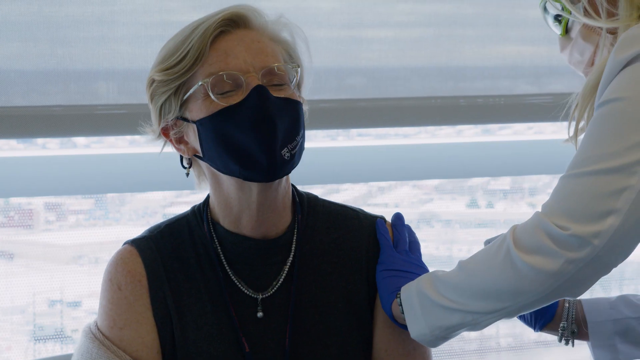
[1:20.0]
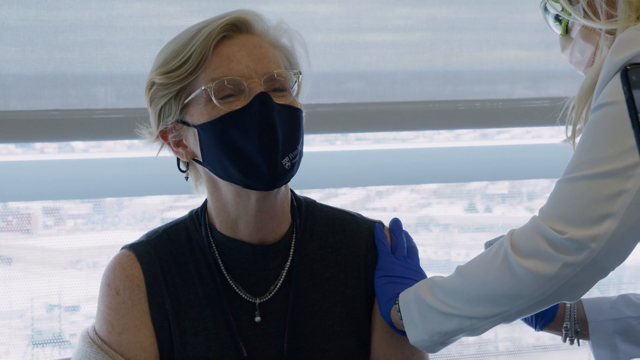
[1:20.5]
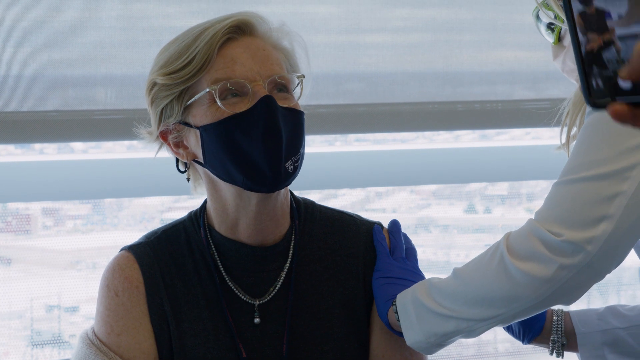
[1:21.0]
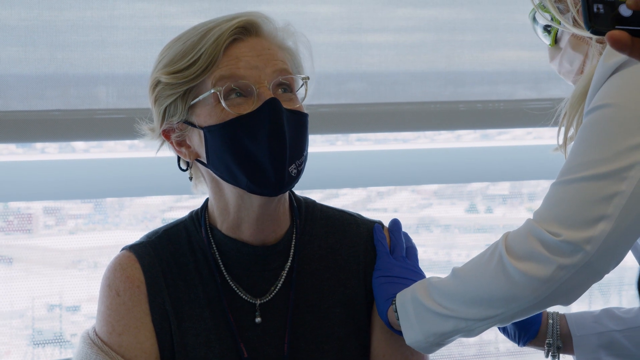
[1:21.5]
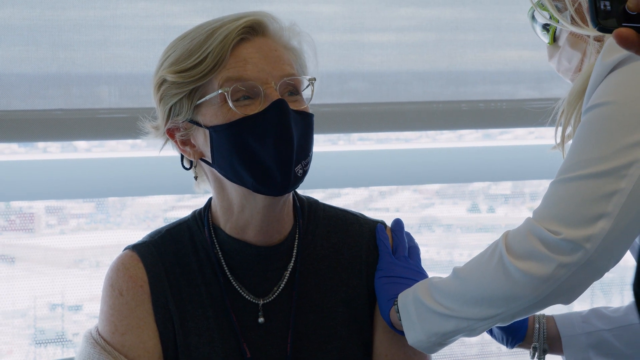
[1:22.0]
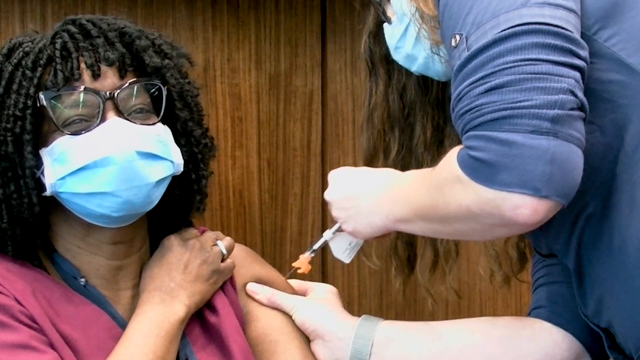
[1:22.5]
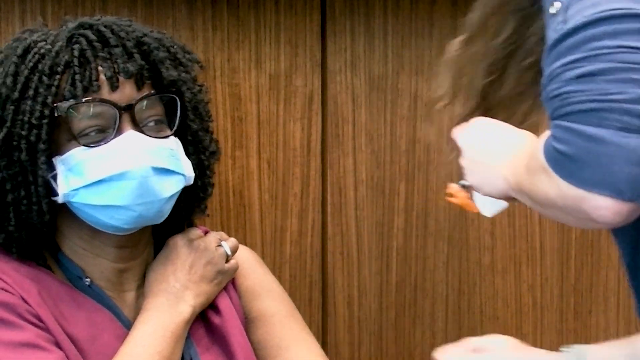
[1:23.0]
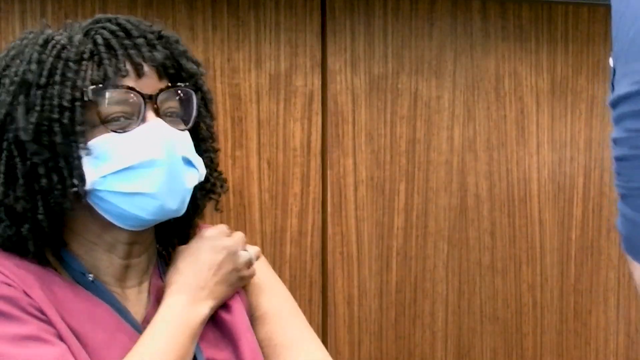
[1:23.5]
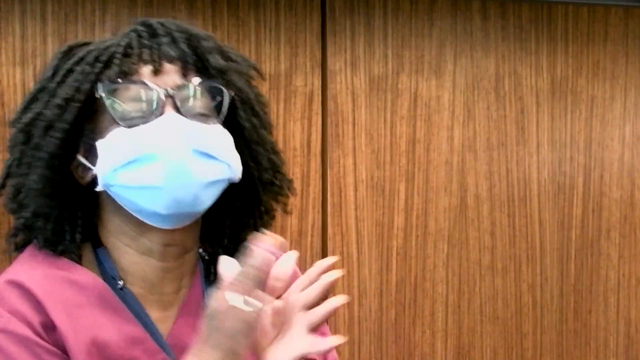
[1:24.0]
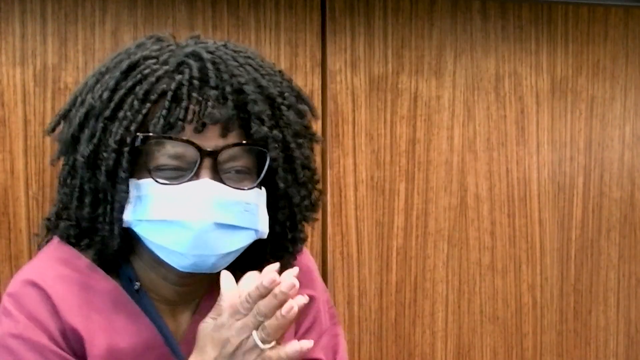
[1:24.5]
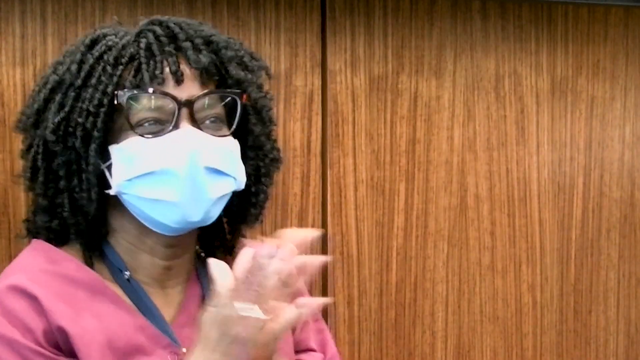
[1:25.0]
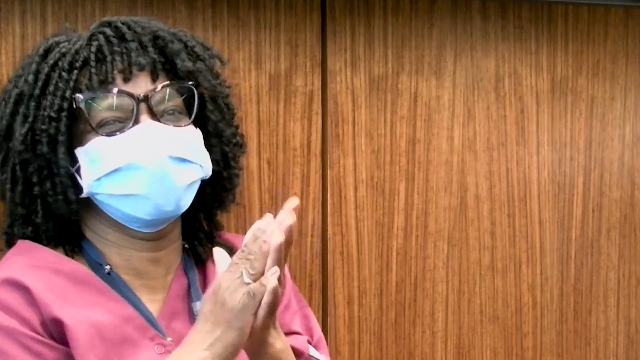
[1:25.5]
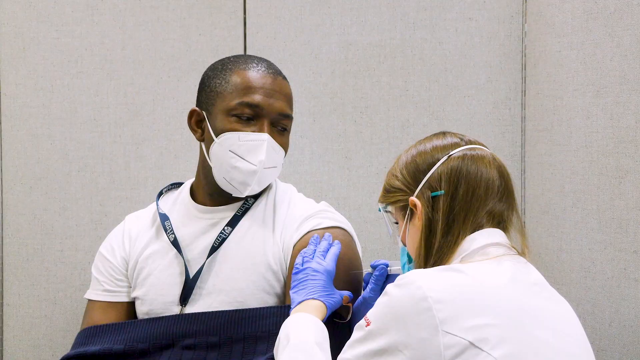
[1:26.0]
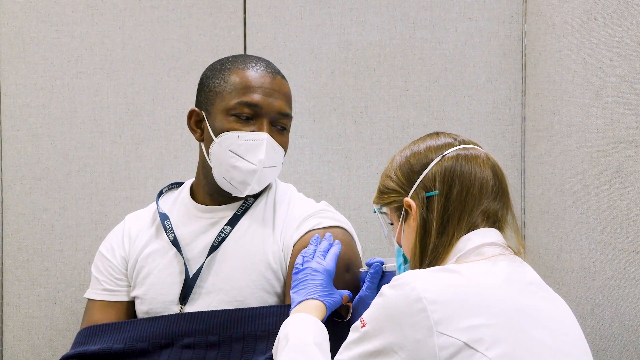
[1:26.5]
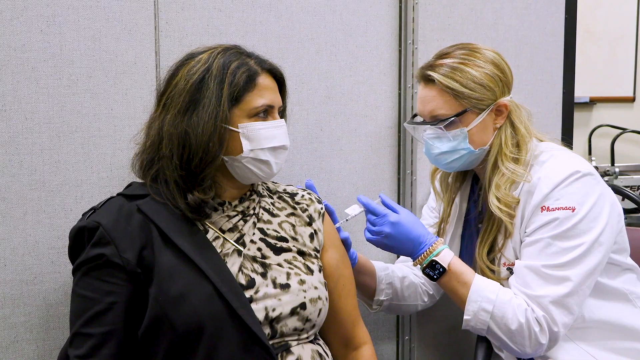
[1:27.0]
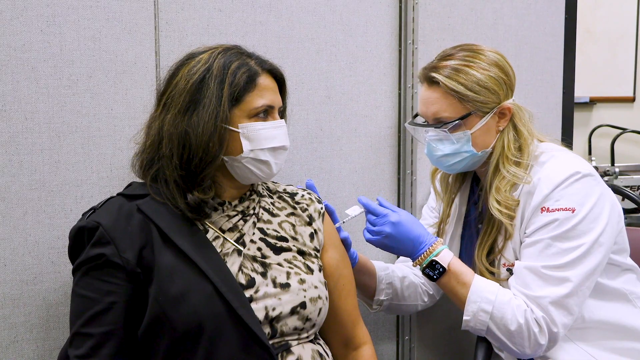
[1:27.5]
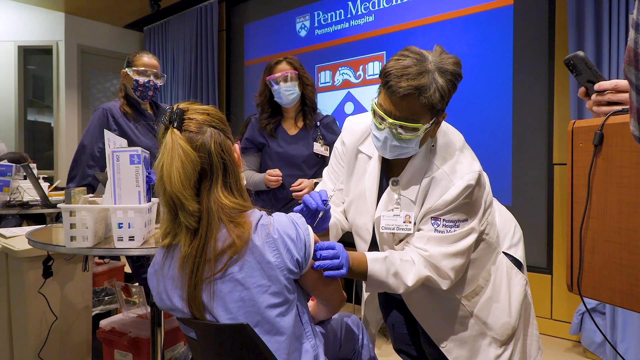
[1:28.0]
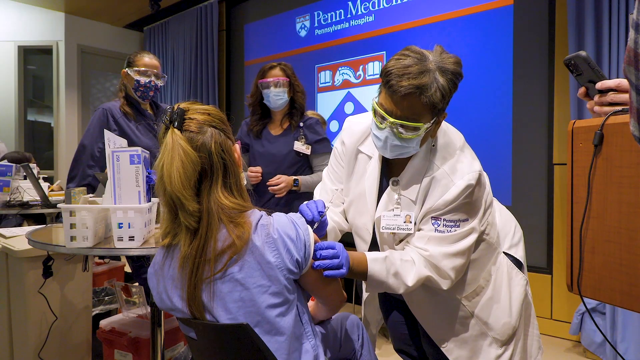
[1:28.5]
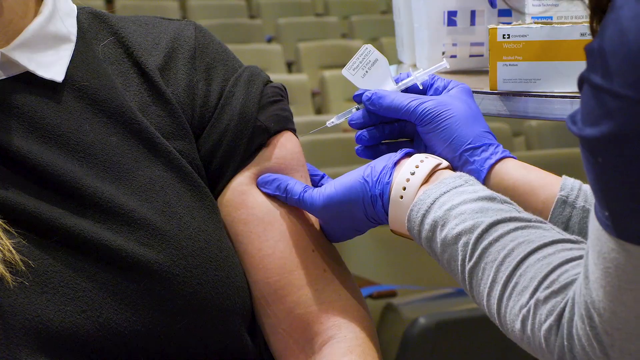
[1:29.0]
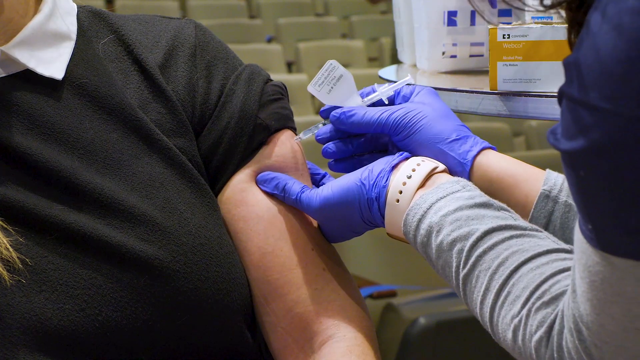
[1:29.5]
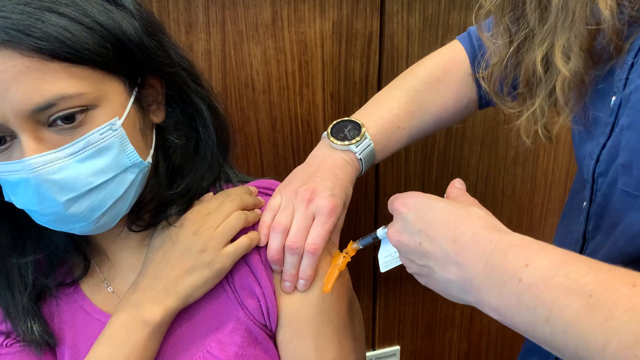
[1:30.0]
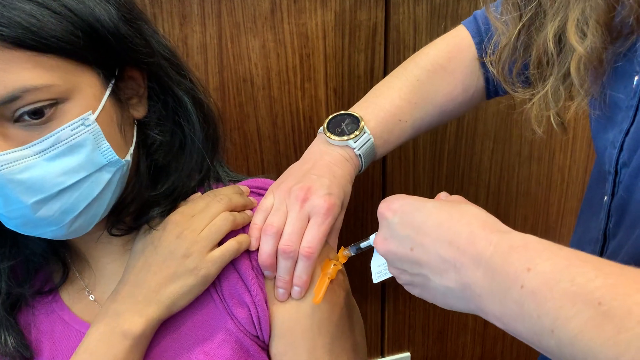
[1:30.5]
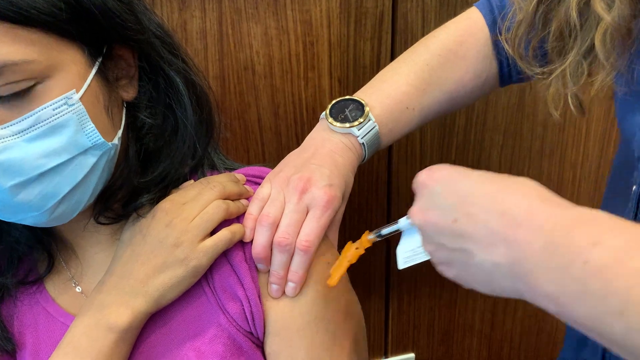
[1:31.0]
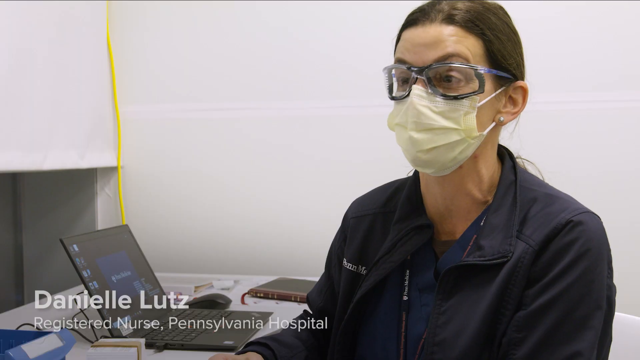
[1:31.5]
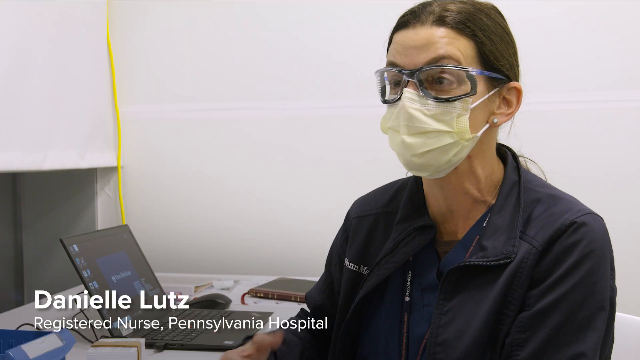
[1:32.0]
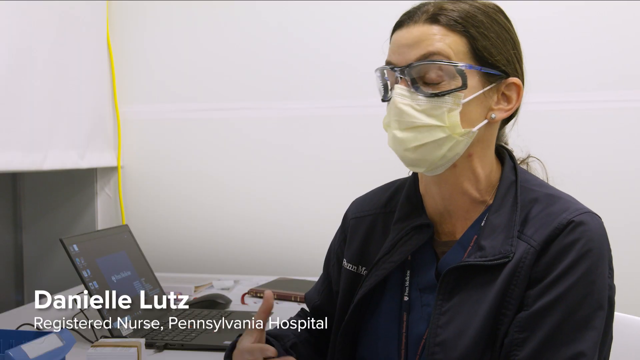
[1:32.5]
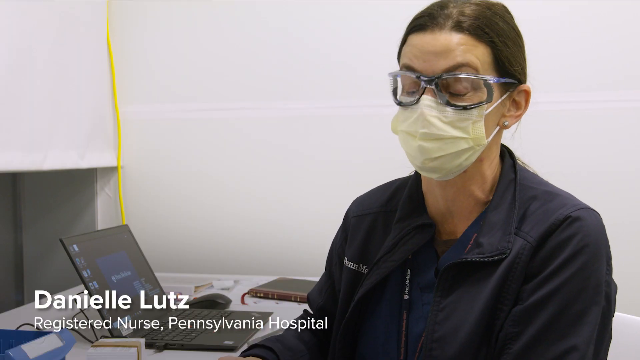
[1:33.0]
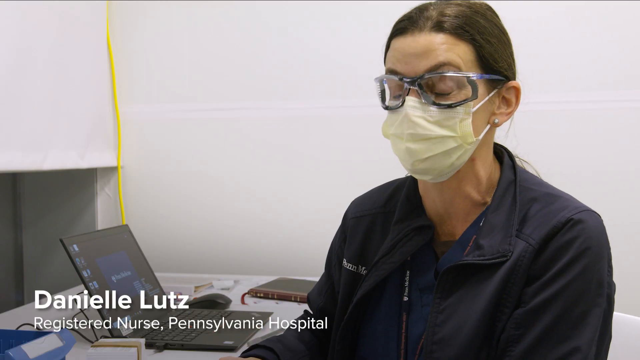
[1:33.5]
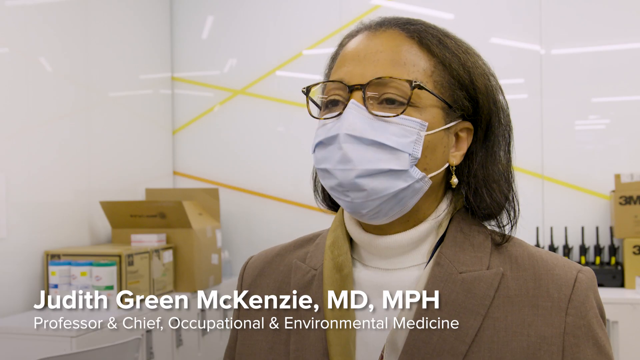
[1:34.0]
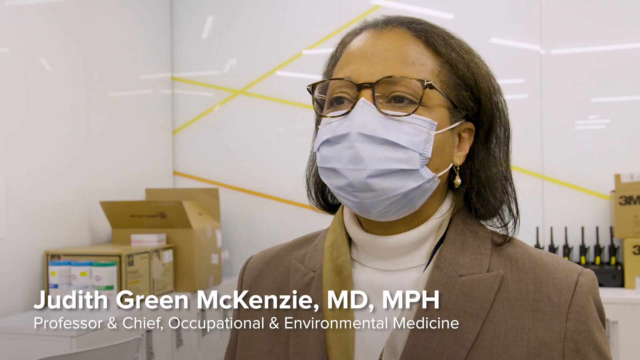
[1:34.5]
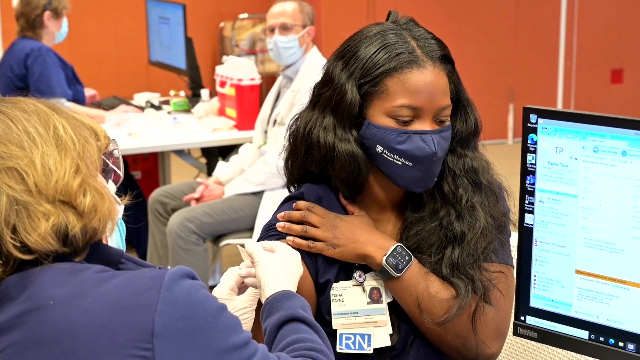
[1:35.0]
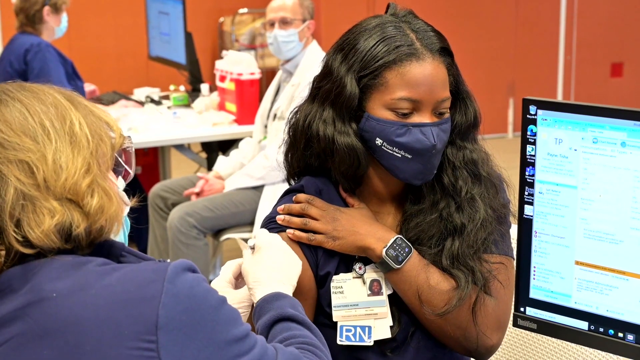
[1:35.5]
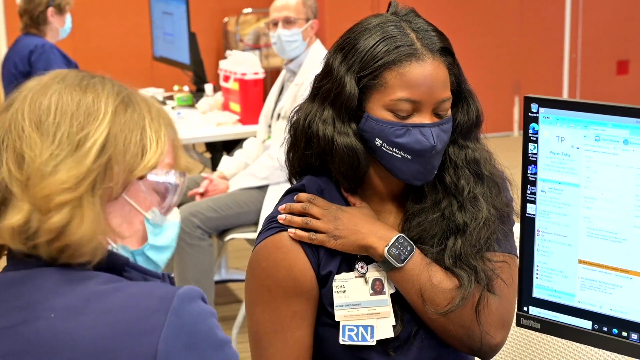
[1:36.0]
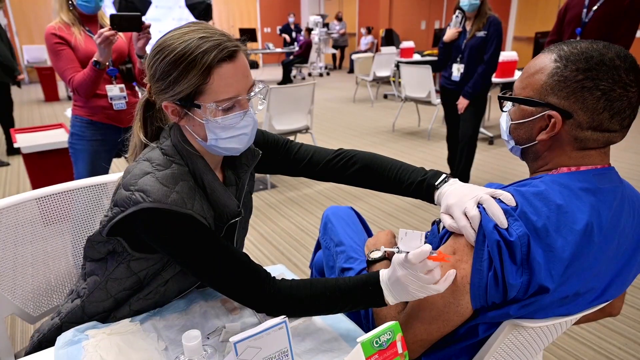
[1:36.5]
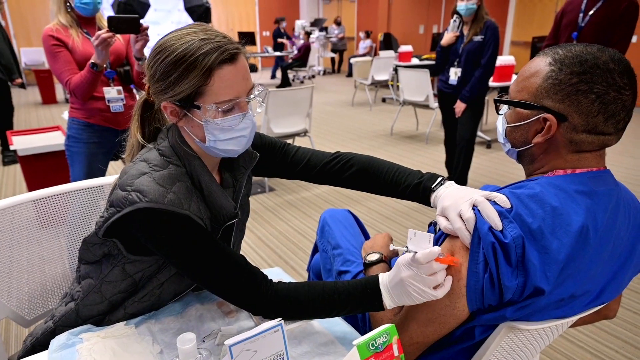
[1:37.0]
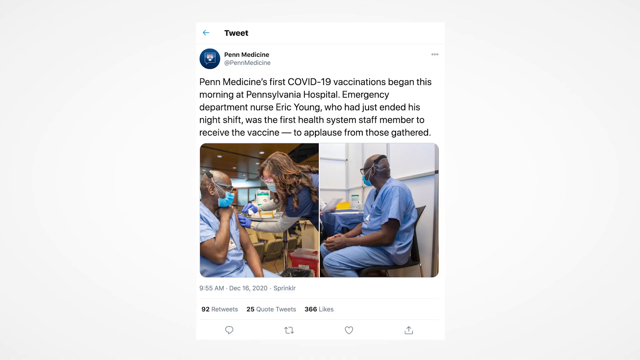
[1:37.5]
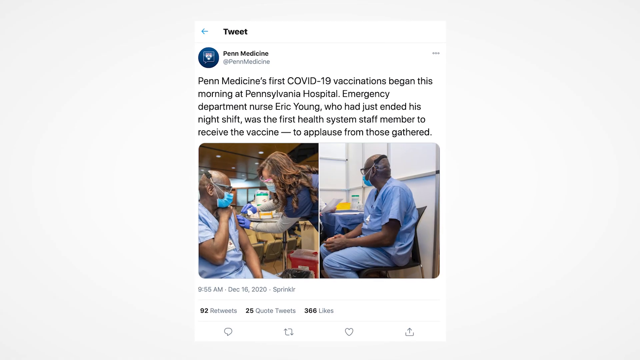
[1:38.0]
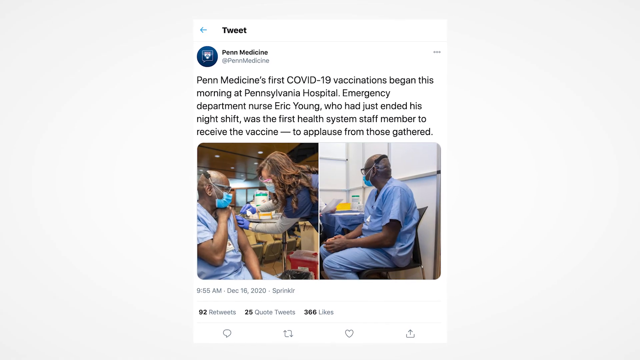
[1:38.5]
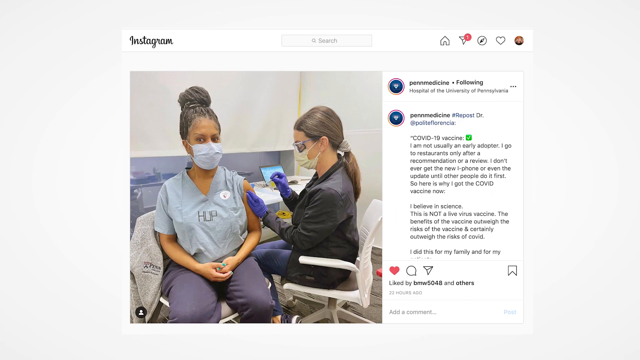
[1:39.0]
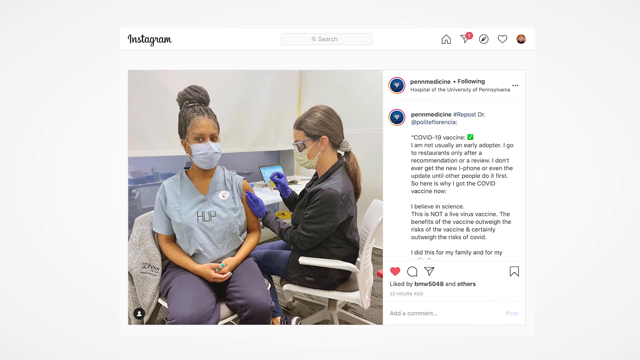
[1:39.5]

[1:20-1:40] The news item is over, and the footage shows individuals in the hospital receiving vaccines, possibly staff members, with different injection techniques. In the first, the patient, a woman, sits in a chair. The vaccinator holds the needle in her left hand and uses her right hand to pull the skin apart slightly so it stays taut, then inserts and withdraws the needle quickly. The patient smiles broadly and starts clapping her hands, and no swab is applied to the injection site. In the next, the patient sits in a chair while the doctor kneels, slightly lower than the patient. She pulls the skin apart with the index finger and thumb of her left hand, holds the hypodermic like a pen between two fingers and a thumb, and inserts the needle very slowly. In another, a woman sits down to receive the vaccine from a doctor wearing a mask, goggles and blue gloves. The doctor holds the hypodermic with her thumb and middle finger and leans over, close to the woman. Rather than squeezing the skin apart with index finger and thumb, she holds the back of the arm with four fingers and uses her thumb to pull the skin taut. She gives the vaccine quickly, straight in and straight out. A couple of other, very similar techniques are shown. The video then cuts to people being interviewed in their office: first Danielle Lutz, then Judith Green-McKenzie, both in similar head-and-shoulders shots.